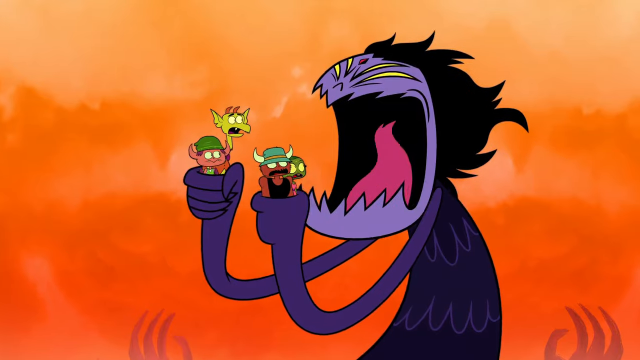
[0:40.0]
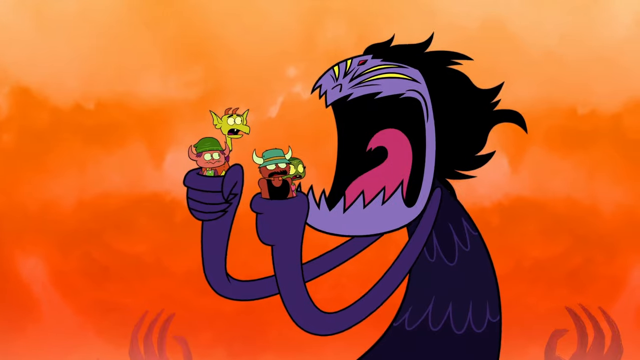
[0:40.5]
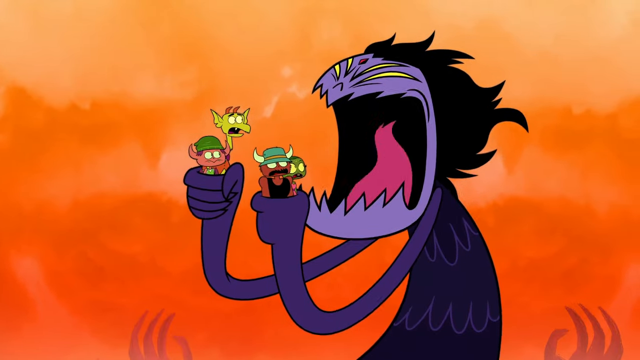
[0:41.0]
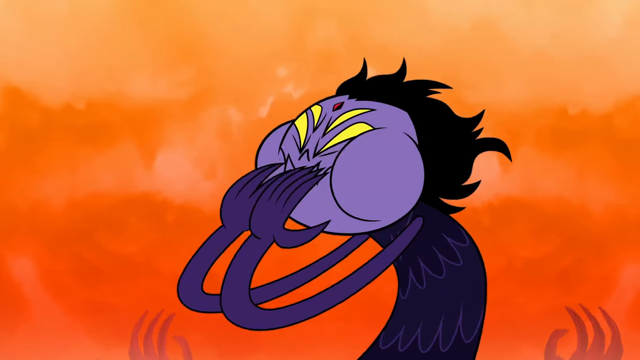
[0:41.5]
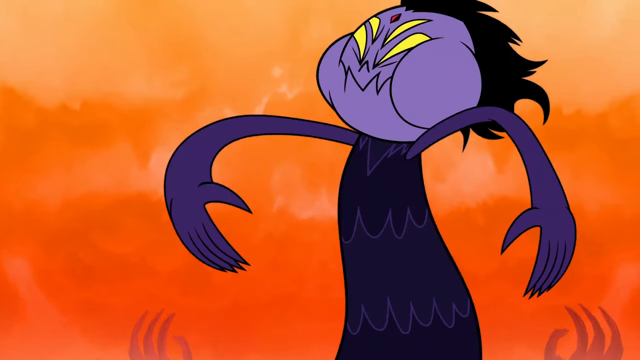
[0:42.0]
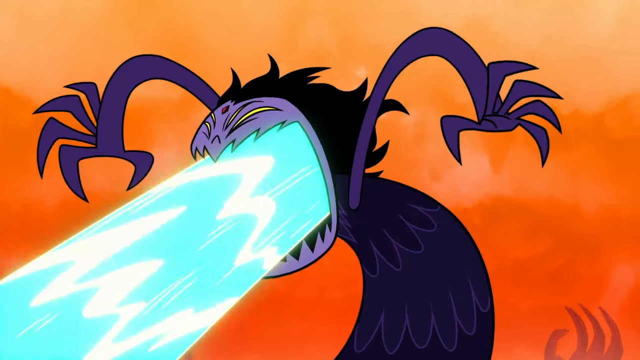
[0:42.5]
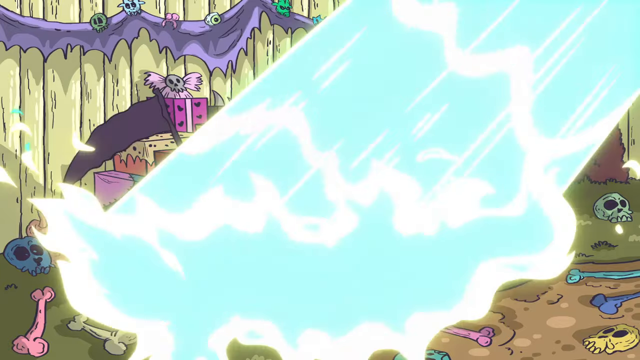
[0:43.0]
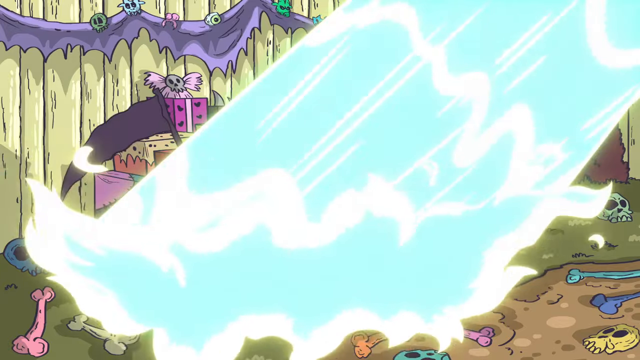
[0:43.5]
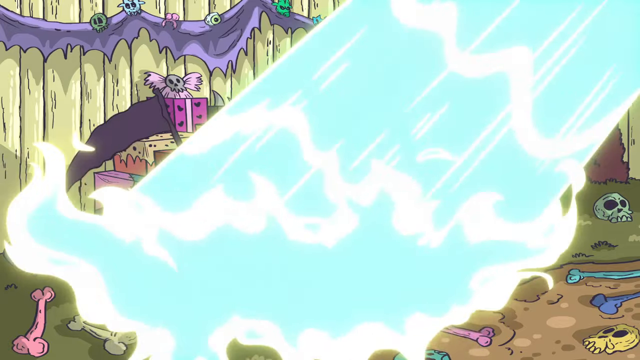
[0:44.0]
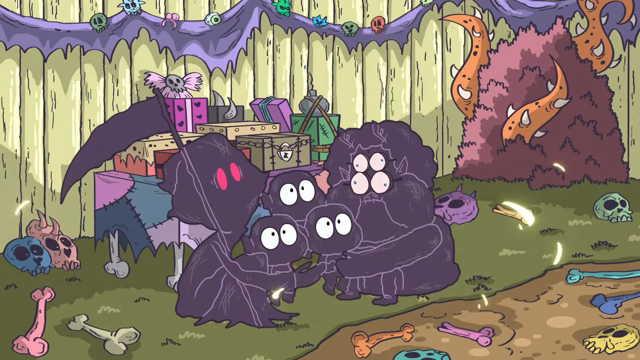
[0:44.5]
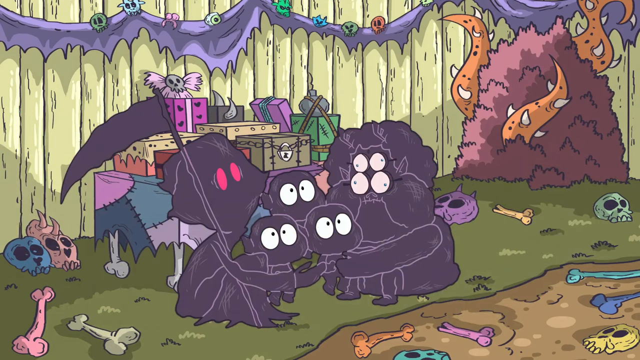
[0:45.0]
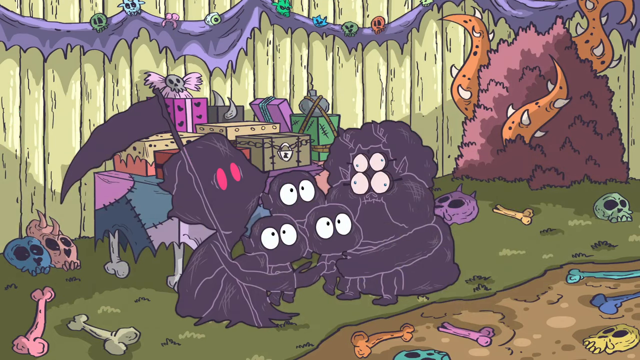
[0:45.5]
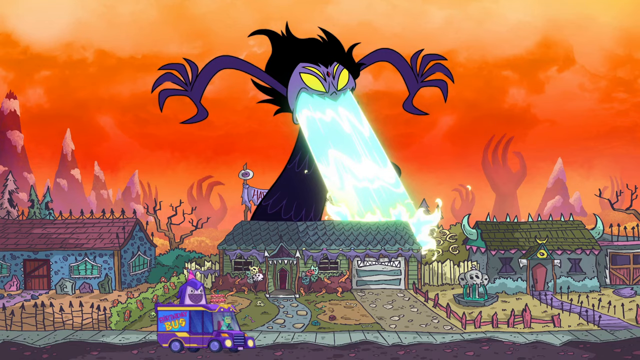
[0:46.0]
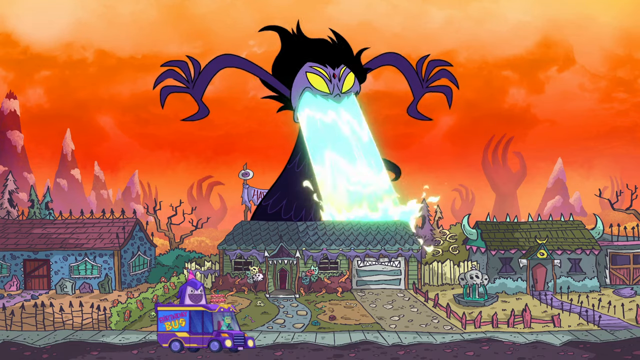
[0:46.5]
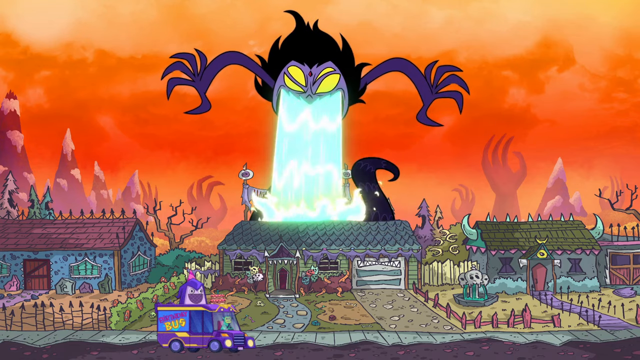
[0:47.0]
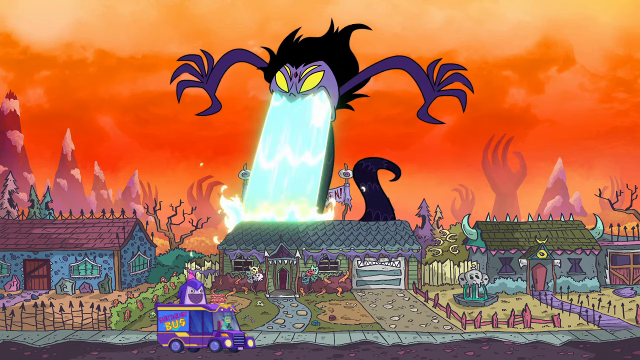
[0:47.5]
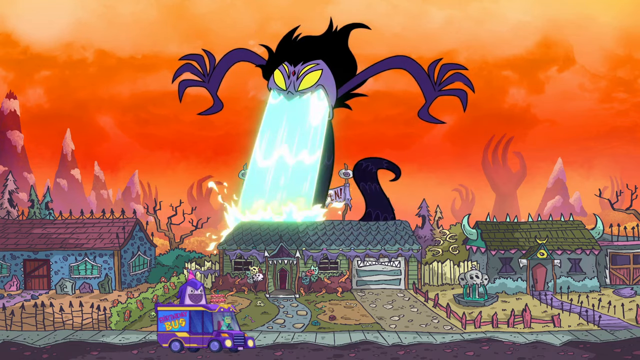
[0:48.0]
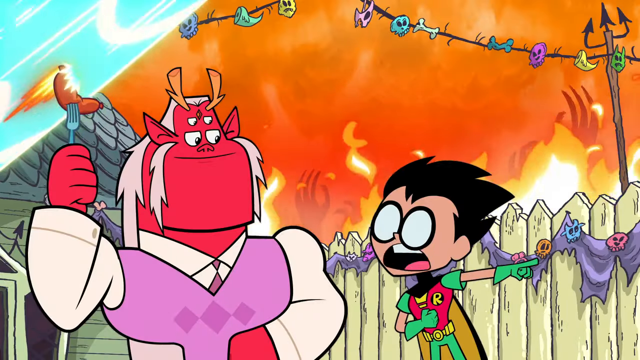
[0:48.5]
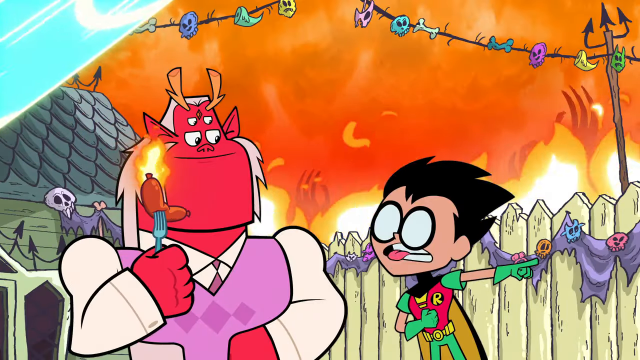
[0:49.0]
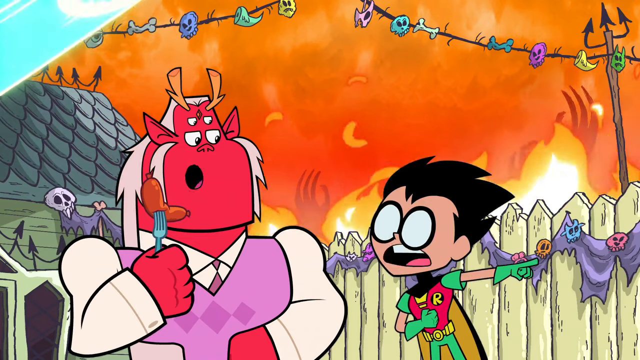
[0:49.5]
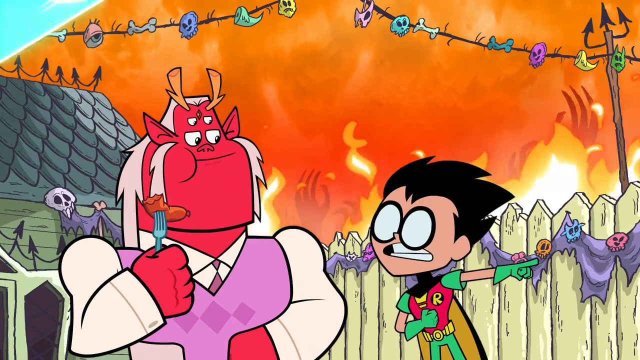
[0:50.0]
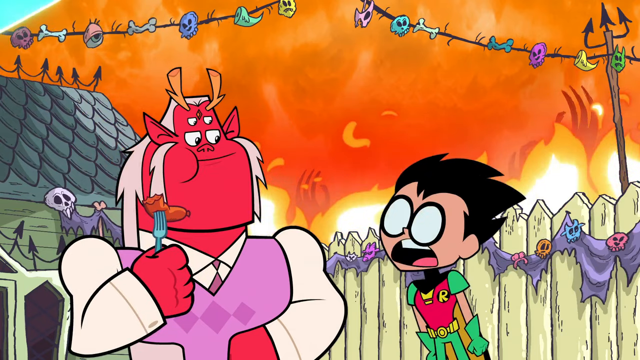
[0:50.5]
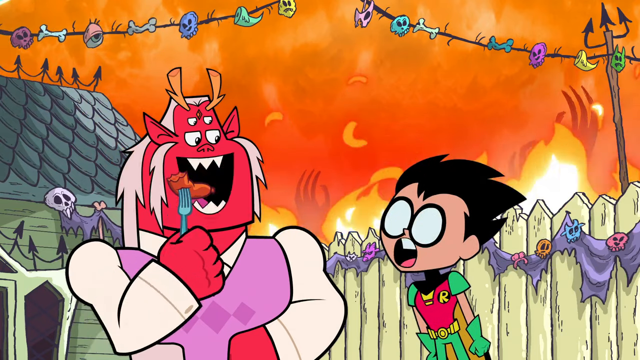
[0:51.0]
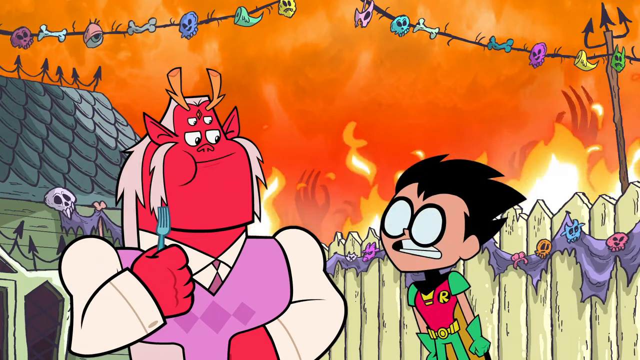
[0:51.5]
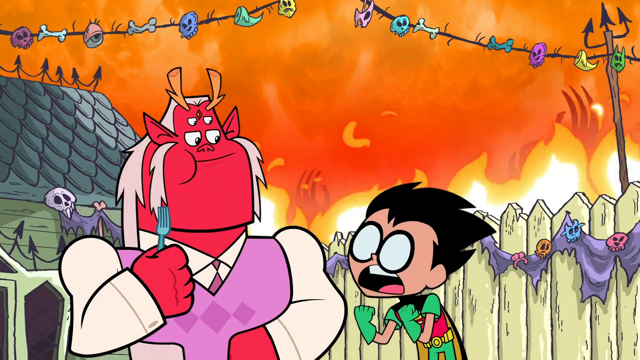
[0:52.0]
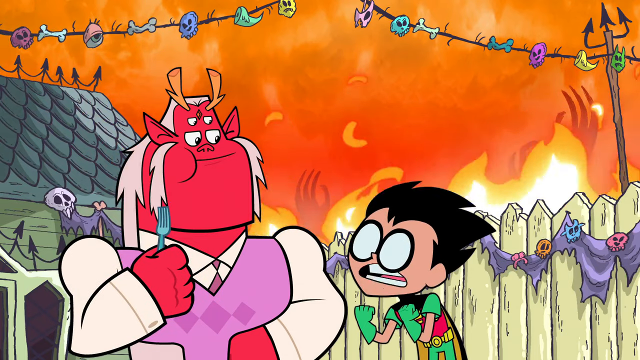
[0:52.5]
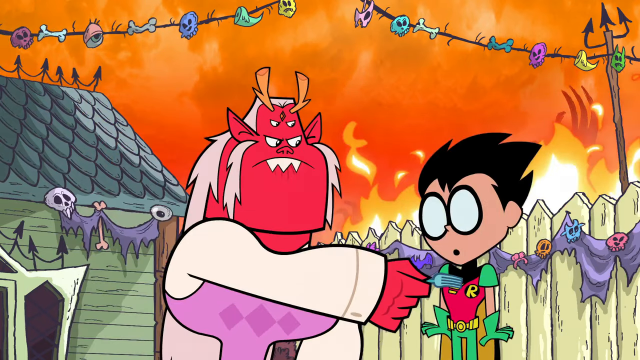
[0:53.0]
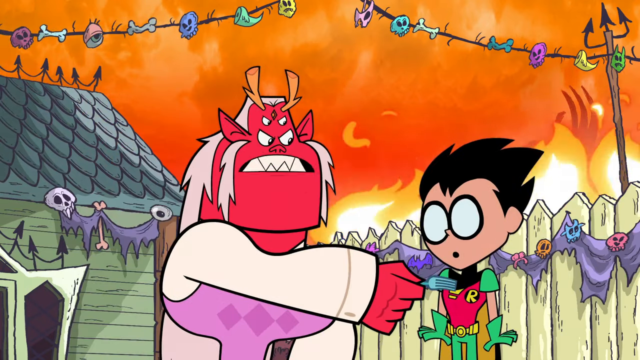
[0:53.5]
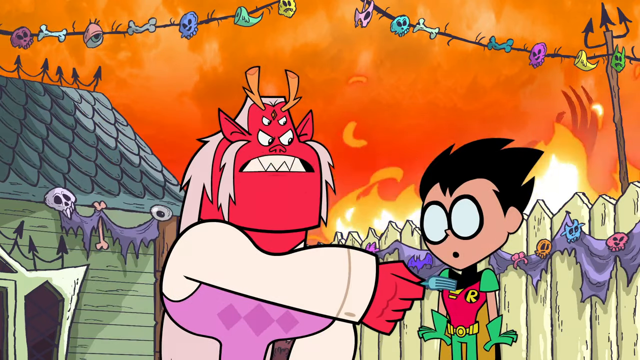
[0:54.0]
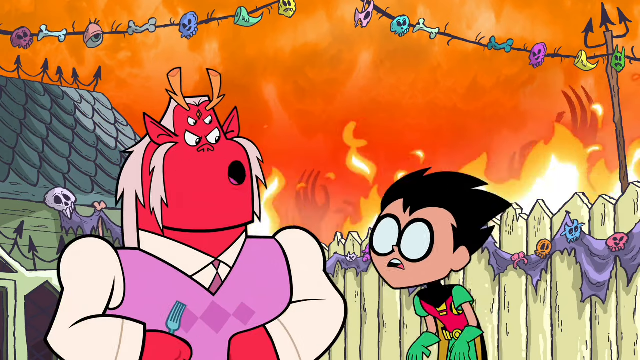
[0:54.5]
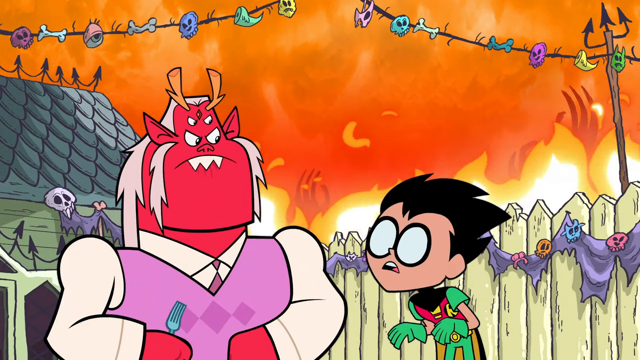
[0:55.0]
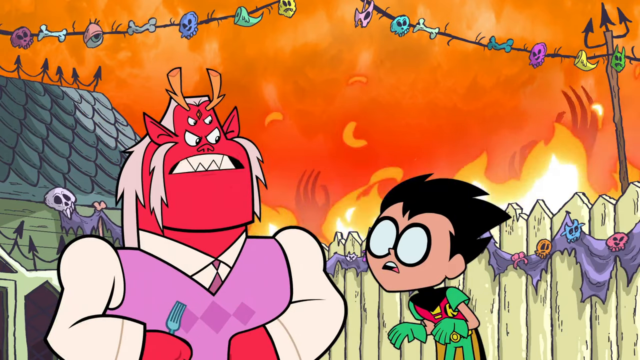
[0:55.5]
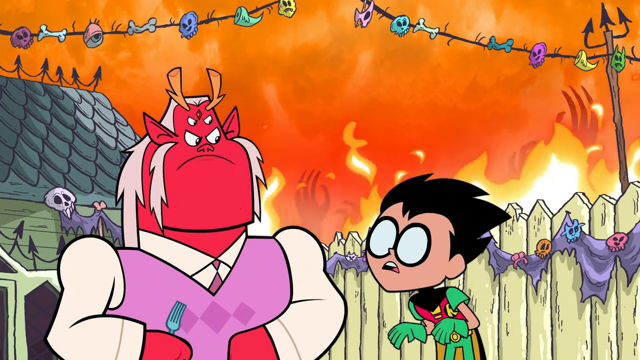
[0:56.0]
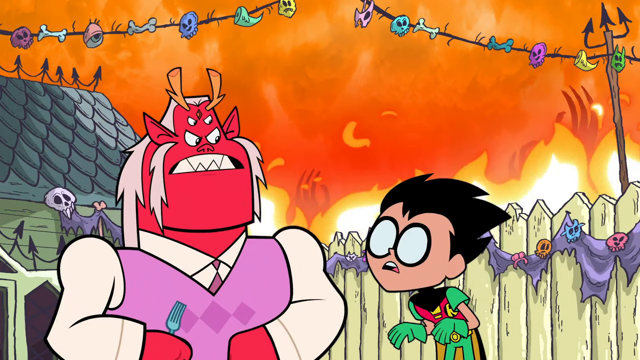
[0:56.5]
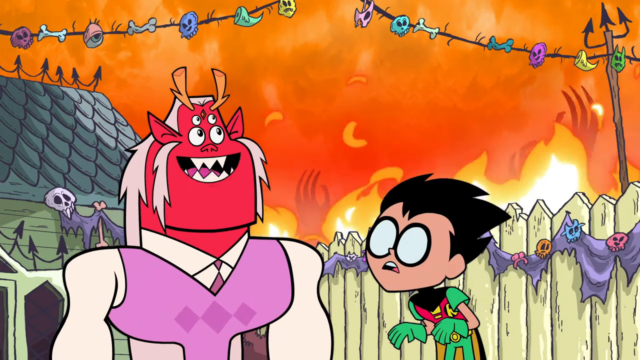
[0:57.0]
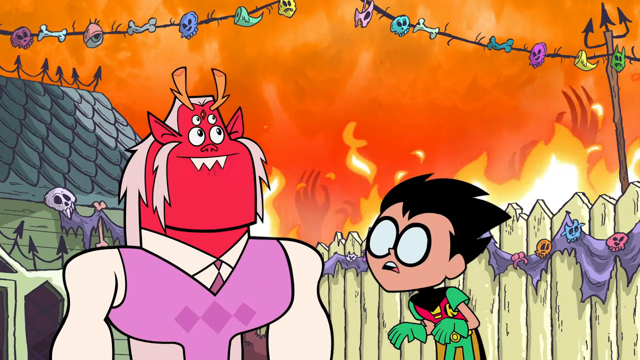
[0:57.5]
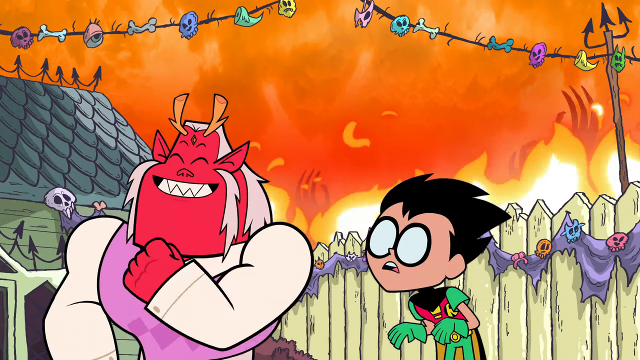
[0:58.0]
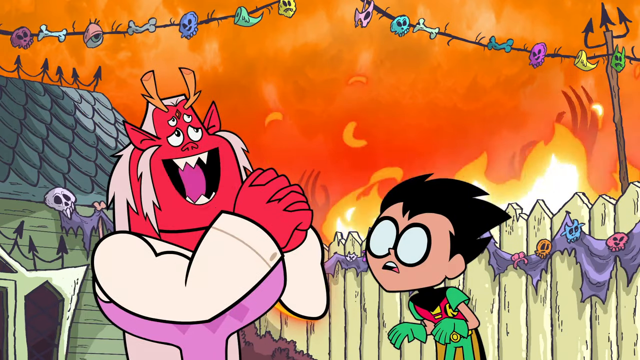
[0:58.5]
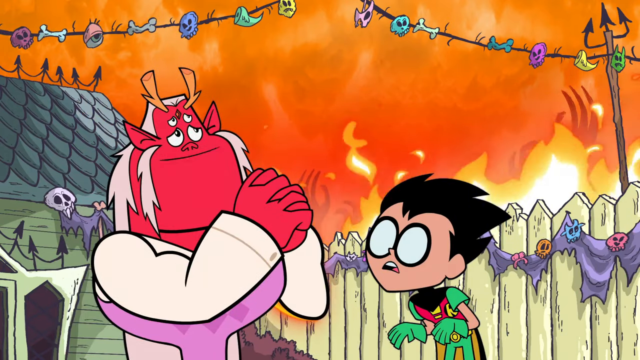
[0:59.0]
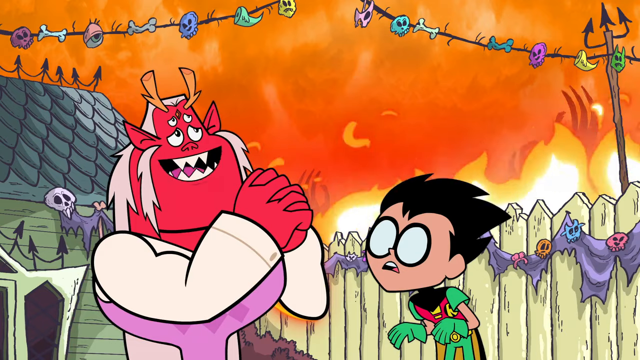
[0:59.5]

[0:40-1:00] The monster has the party guests who were trying to run around, and she eats them. She then opens her mouth wide, and a substance that looks like water but is apparently poison comes out toward people hovering in the background. The background shows the house, lots of presents, a tree that seems to have weird animals in it, and bones everywhere. About five figures huddle together: Death in purple with red eyes, three little babies that all look like monsters with the same terrified look, and the double Miss Piggy, all cowering as the blue substance comes toward them. It rains down on them and they turn black, though they blink, so they seem to still be alive. The scene then moves to a monster neighborhood where the sky is on fire. The goth, now an evil worm-like creature with buggy yellow eyes, black hair and her mouth wide open, has the blue substance coming out of her. She is in the backyard of the neighborhood, with houses on either side that look like where evil people live, and she rains the blue substance down on it. The Robin character comes to the devil character who served her the cake; he is in a nice suit and eating. They have a conversation: Robin is really upset and seems to be asking the devil guy to do something, but the devil guy appears not to want to, and seems proud of or in love with the evil creature.